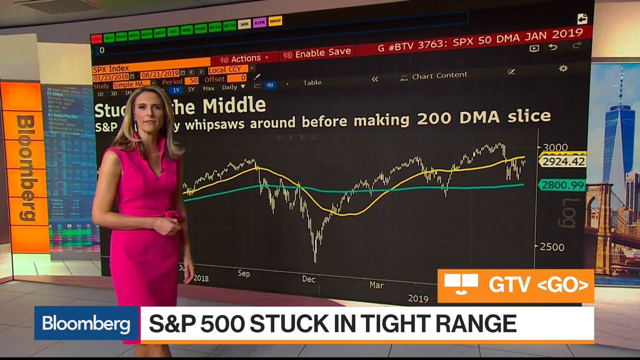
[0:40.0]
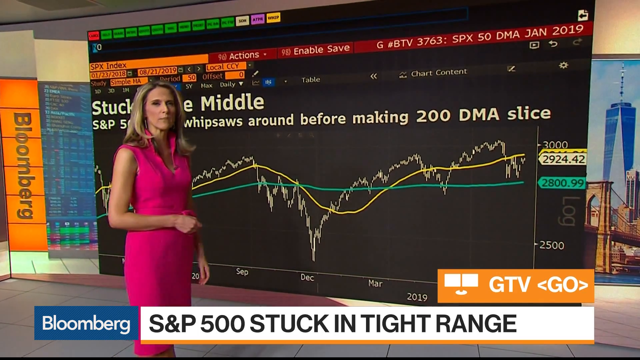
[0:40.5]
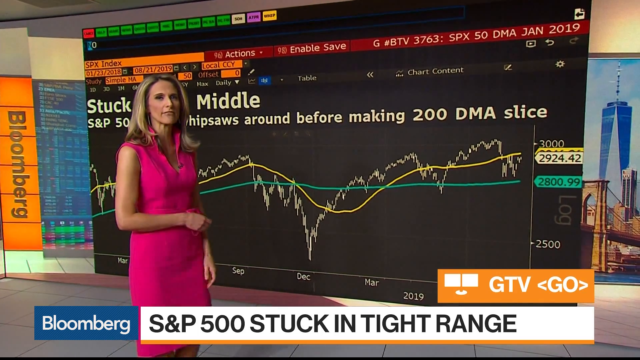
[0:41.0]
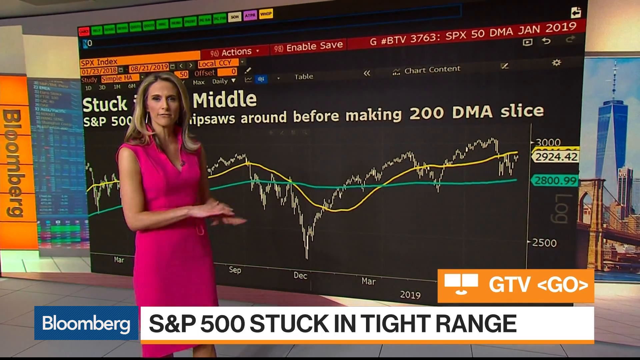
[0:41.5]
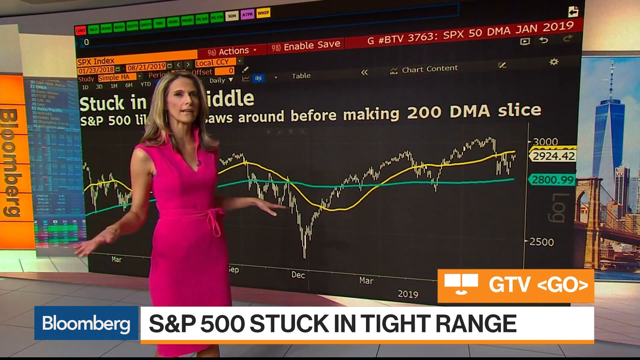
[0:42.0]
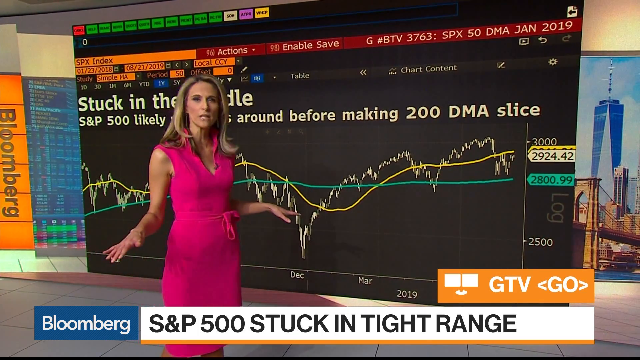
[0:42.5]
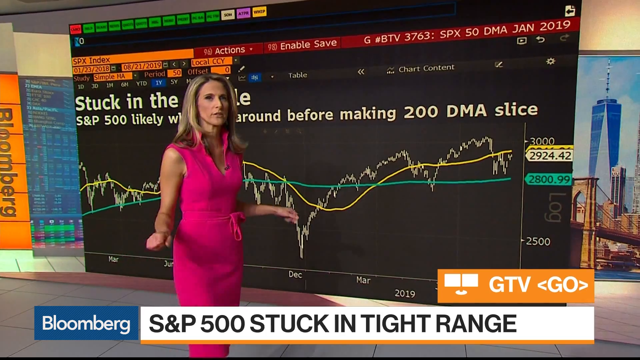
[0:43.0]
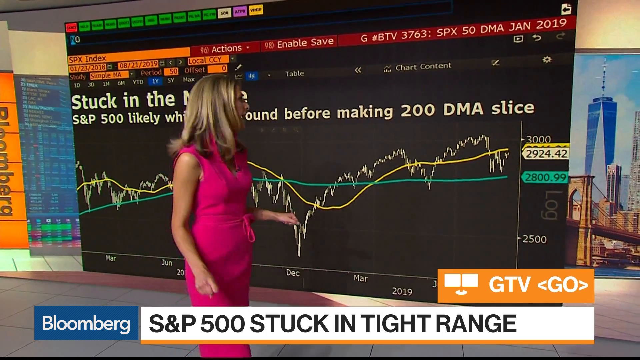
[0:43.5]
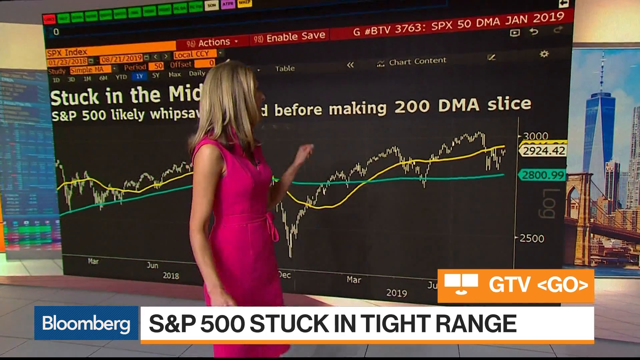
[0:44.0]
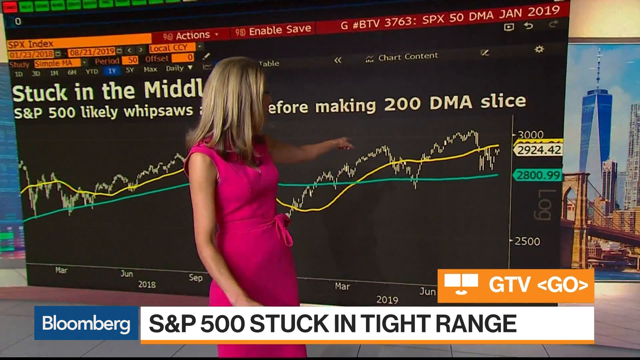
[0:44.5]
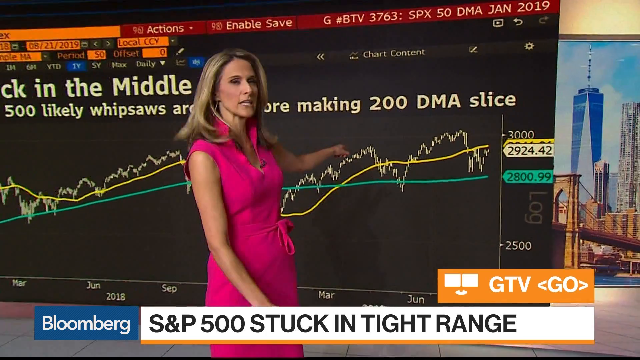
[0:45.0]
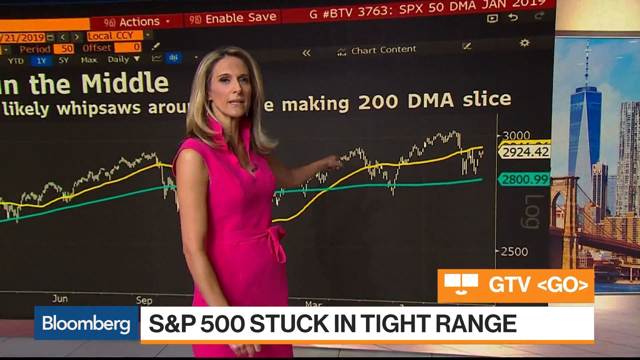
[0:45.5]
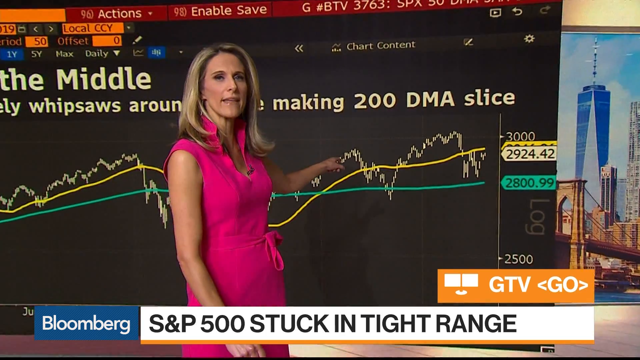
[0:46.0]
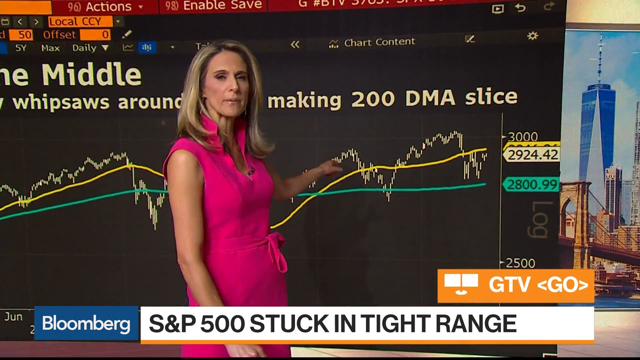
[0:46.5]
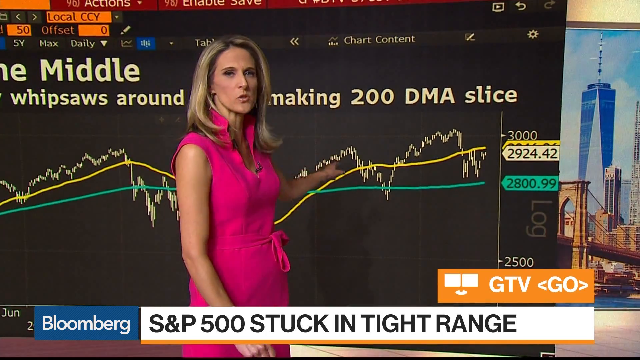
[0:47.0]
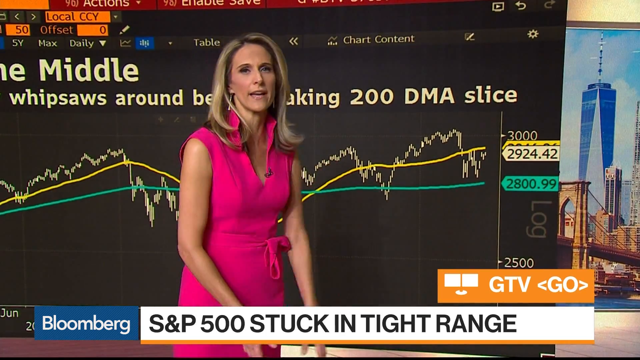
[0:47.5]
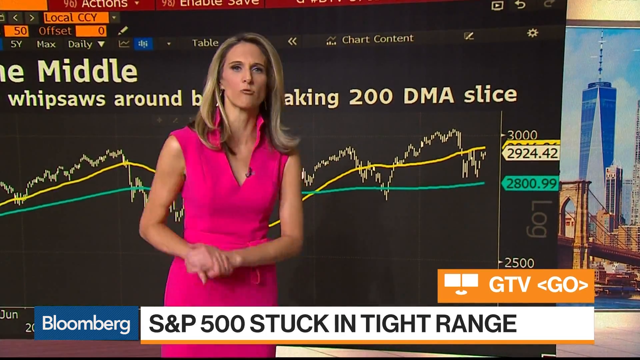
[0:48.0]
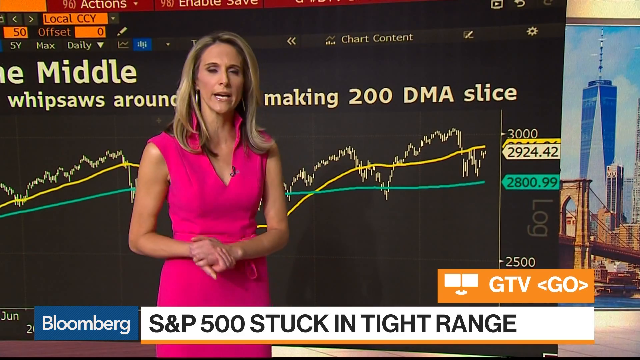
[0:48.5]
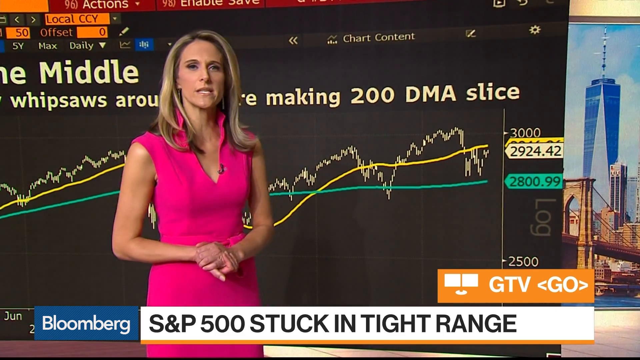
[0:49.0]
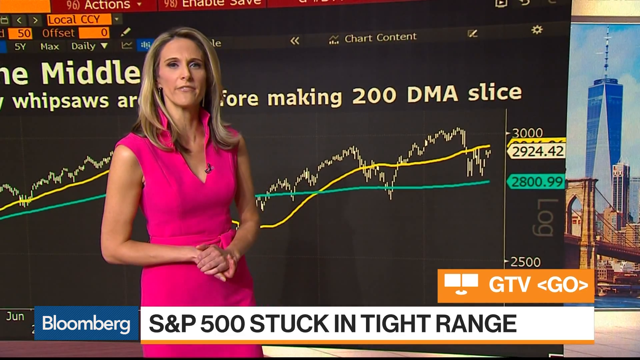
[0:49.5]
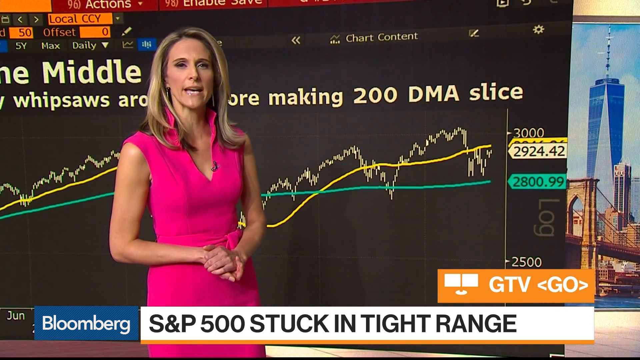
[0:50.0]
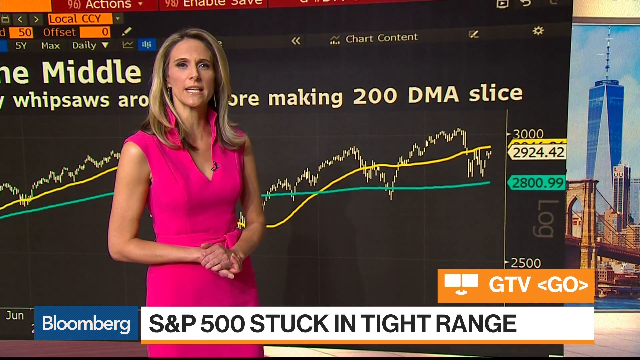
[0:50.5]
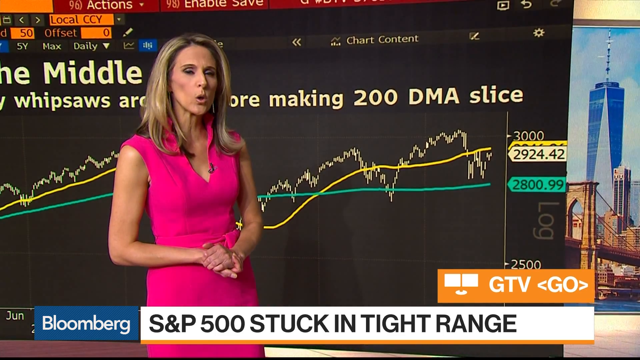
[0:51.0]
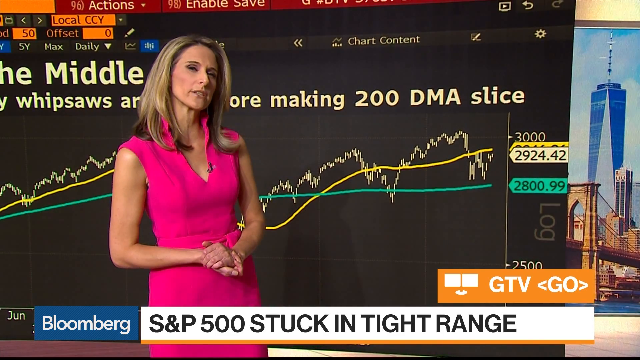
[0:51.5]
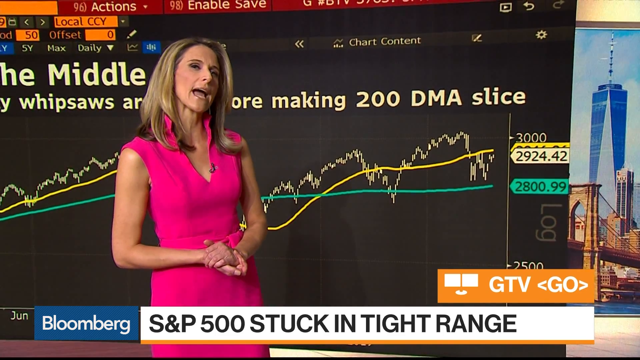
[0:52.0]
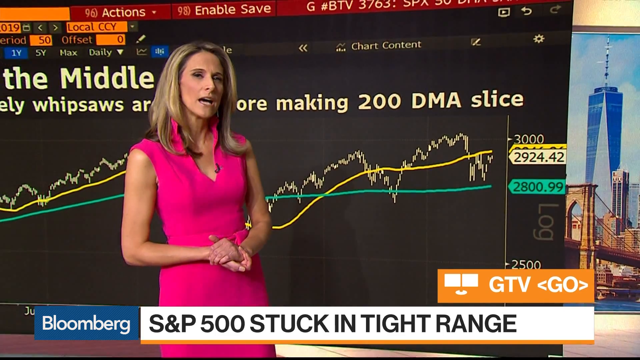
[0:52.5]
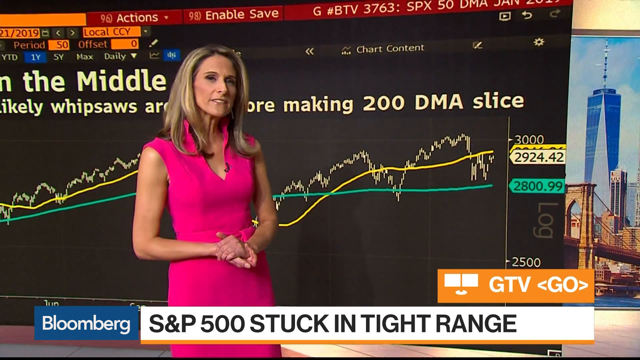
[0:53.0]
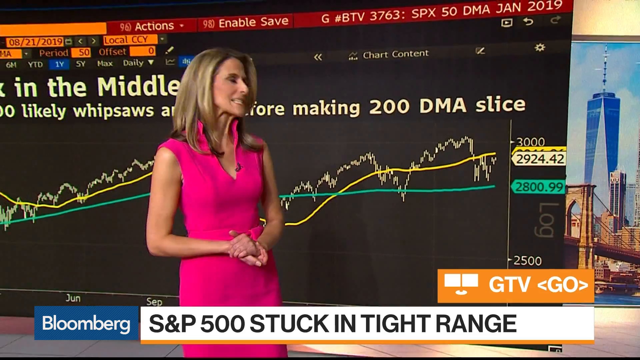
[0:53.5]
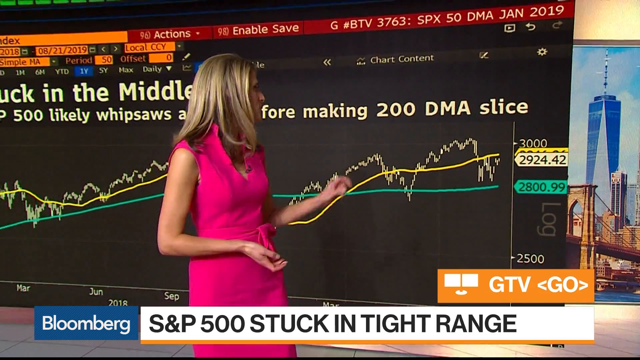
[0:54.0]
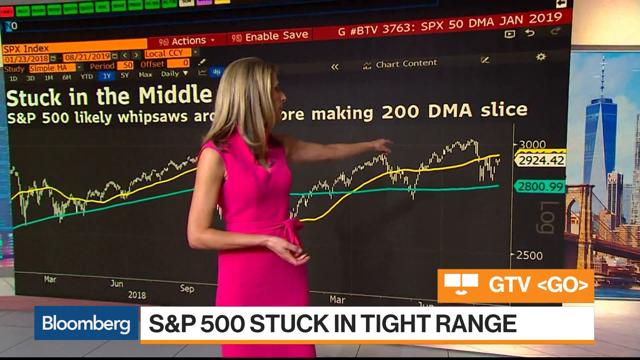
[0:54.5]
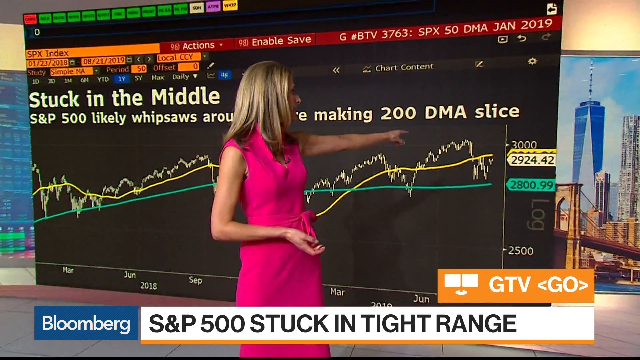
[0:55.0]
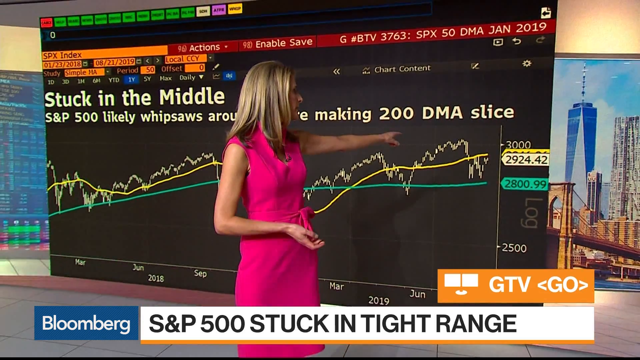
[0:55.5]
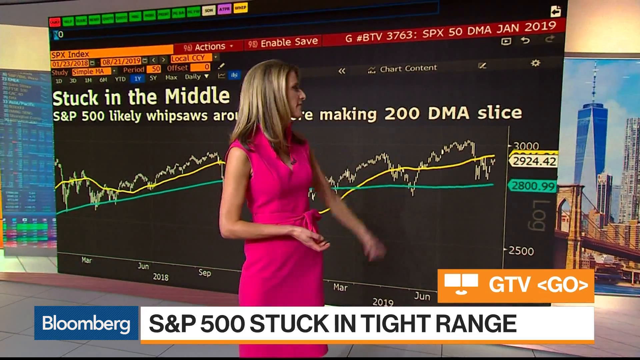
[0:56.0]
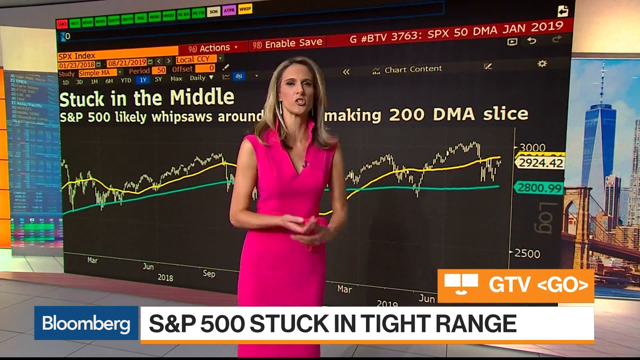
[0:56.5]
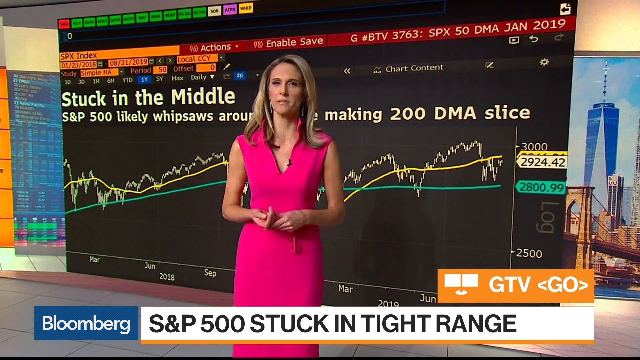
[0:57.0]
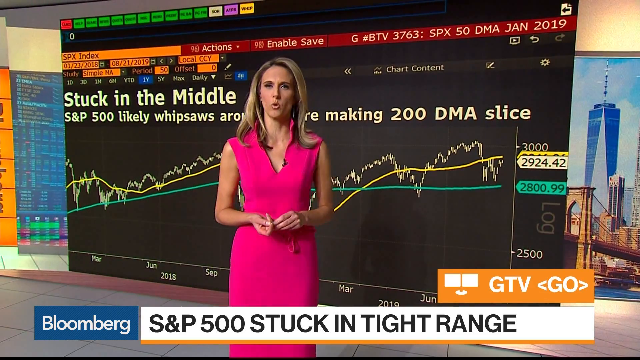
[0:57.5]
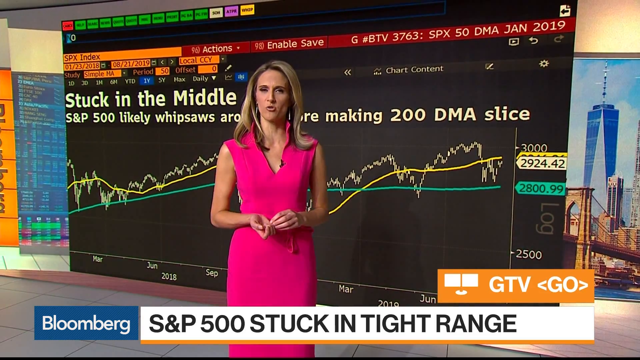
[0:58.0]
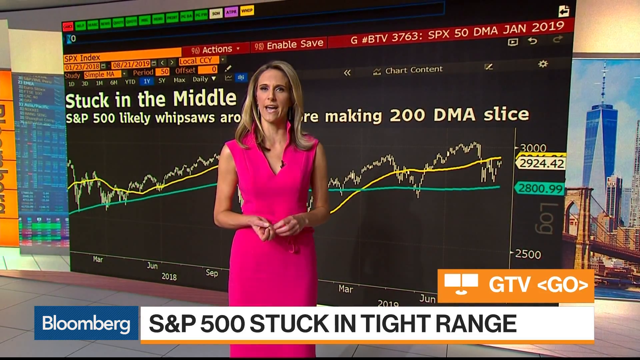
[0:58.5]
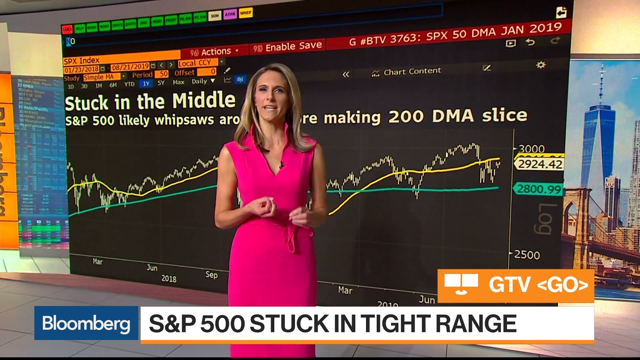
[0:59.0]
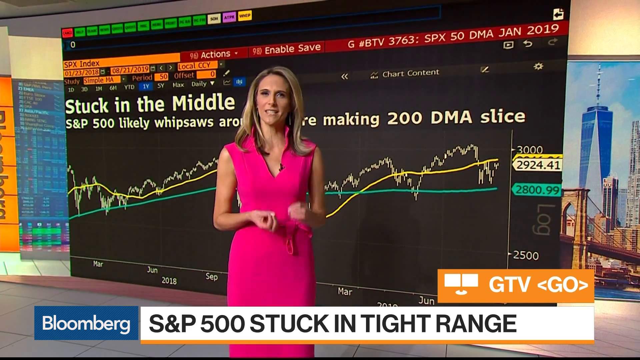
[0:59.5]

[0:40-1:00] The chart shows figures on its lines: the yellow line is at about 2,924.2, while the green line is at 2,800.99.